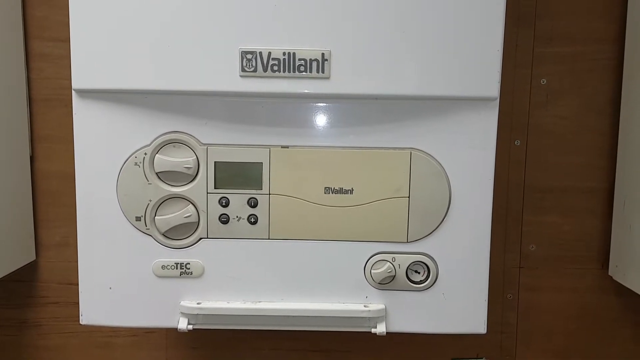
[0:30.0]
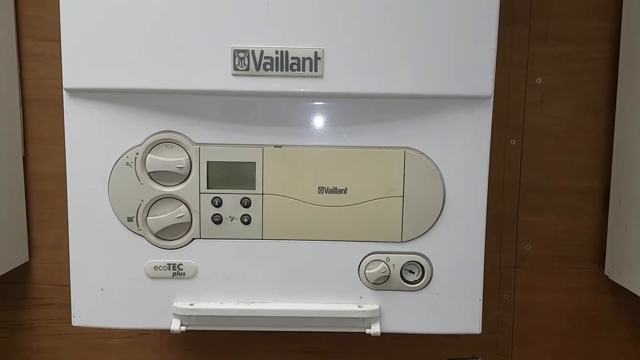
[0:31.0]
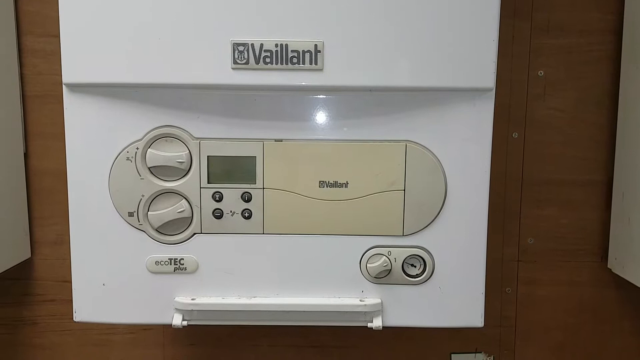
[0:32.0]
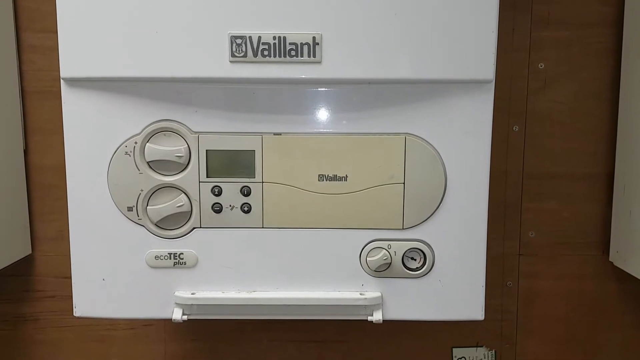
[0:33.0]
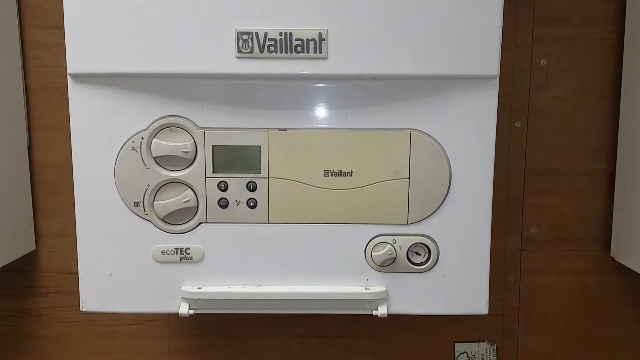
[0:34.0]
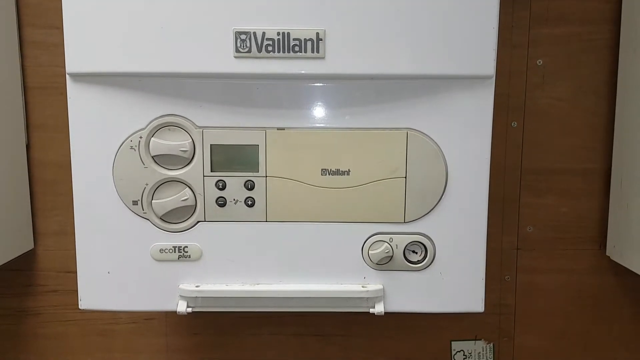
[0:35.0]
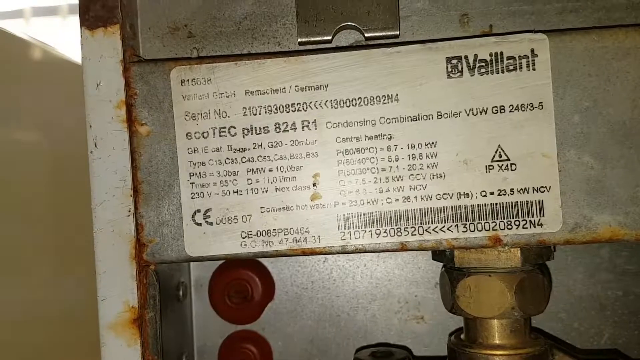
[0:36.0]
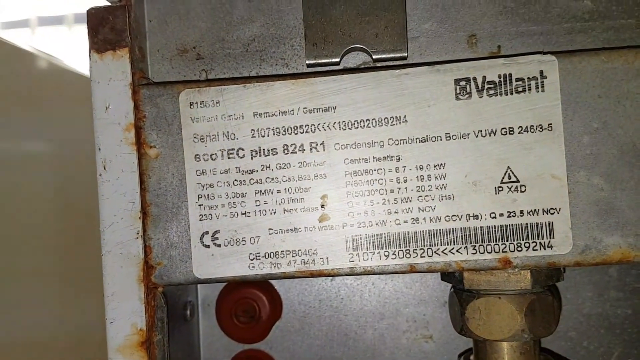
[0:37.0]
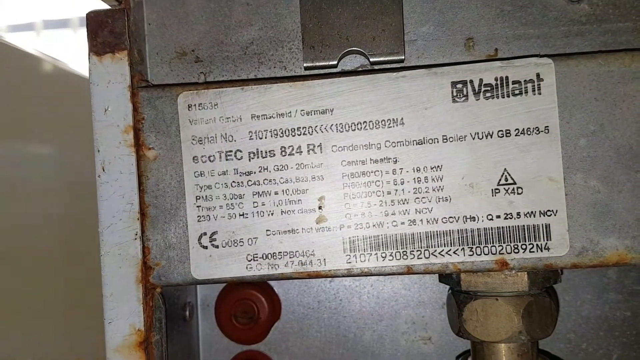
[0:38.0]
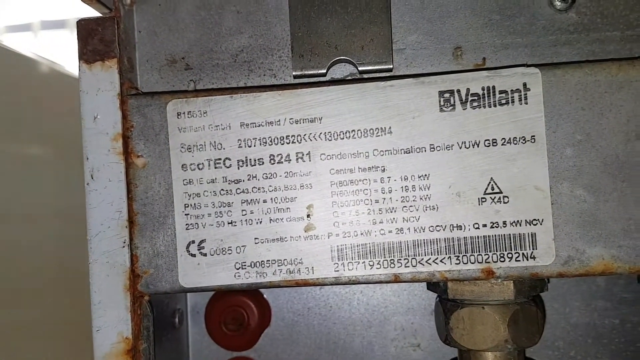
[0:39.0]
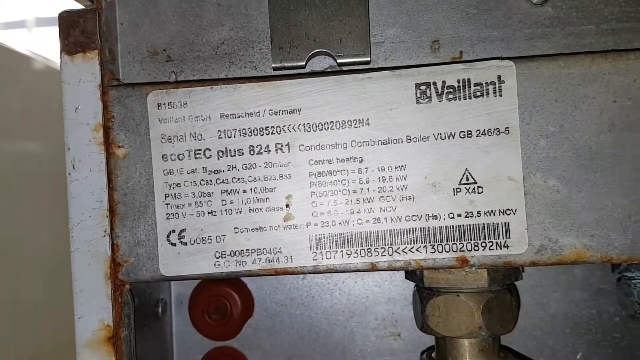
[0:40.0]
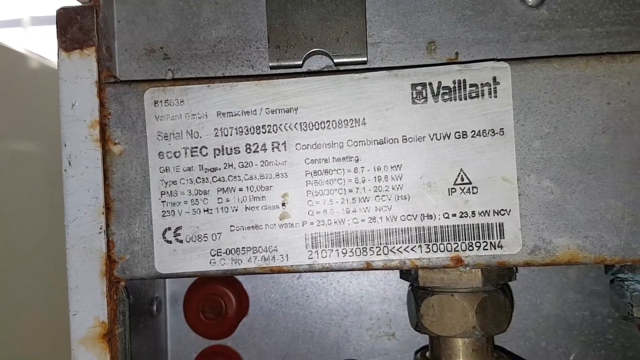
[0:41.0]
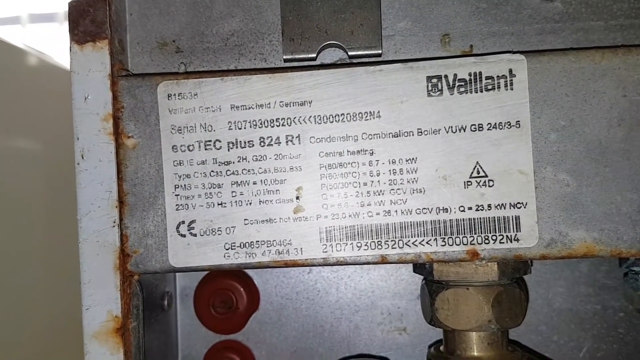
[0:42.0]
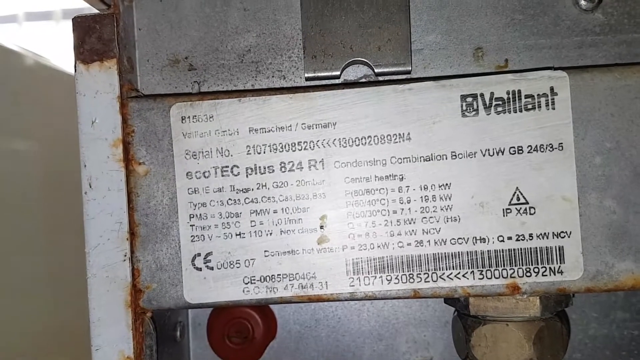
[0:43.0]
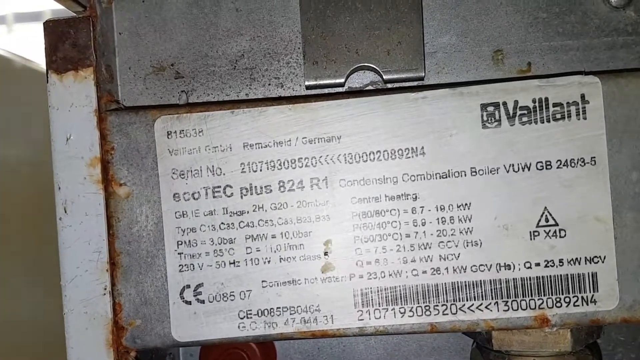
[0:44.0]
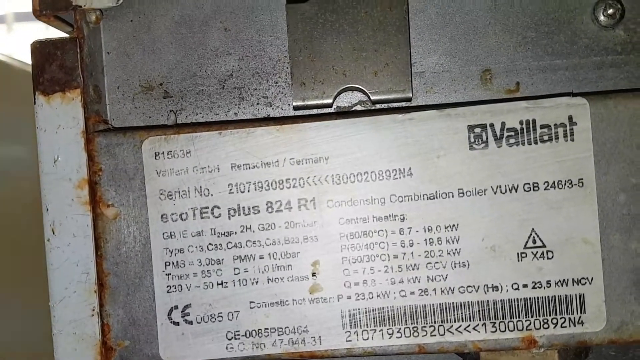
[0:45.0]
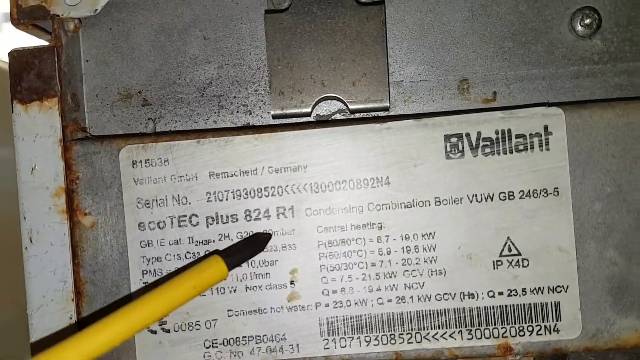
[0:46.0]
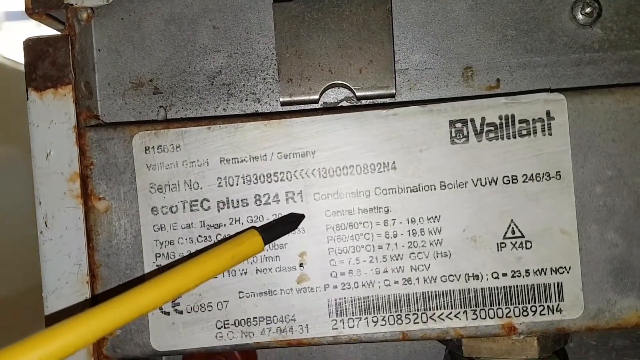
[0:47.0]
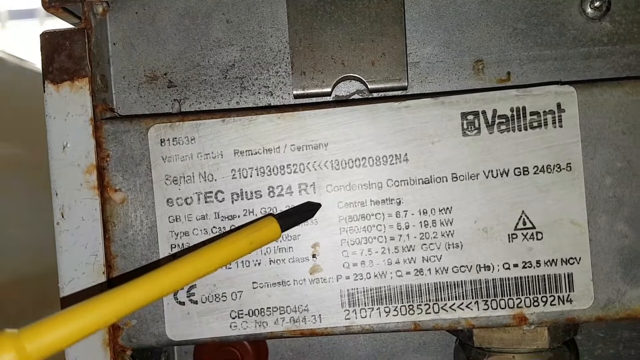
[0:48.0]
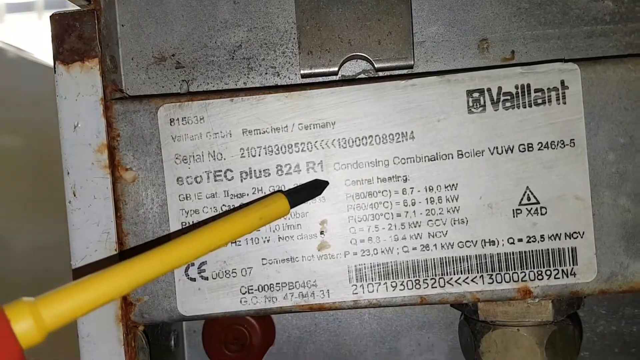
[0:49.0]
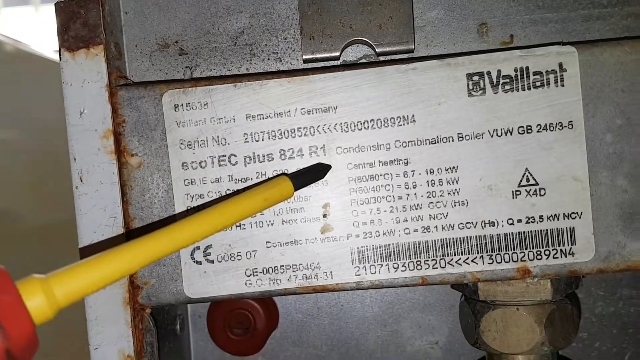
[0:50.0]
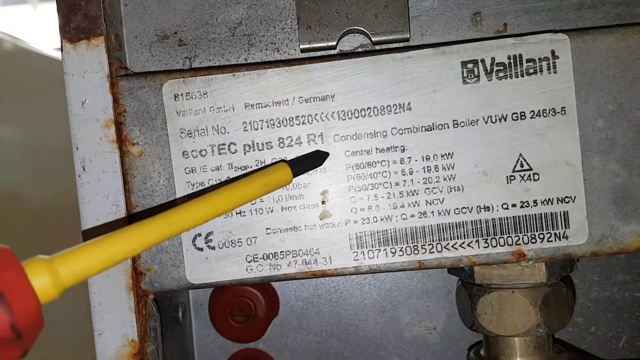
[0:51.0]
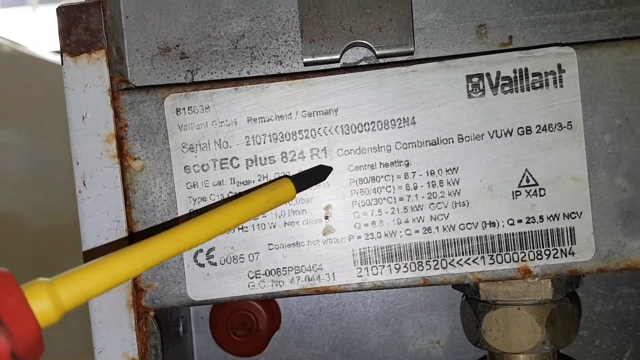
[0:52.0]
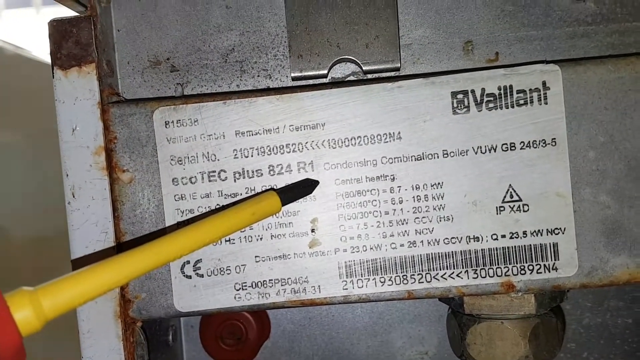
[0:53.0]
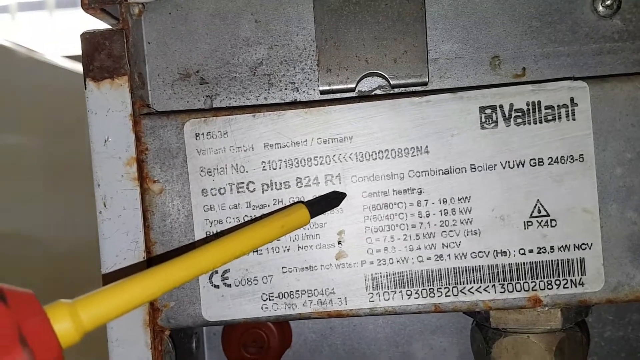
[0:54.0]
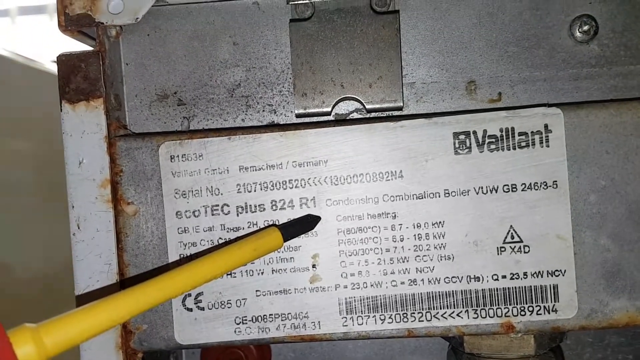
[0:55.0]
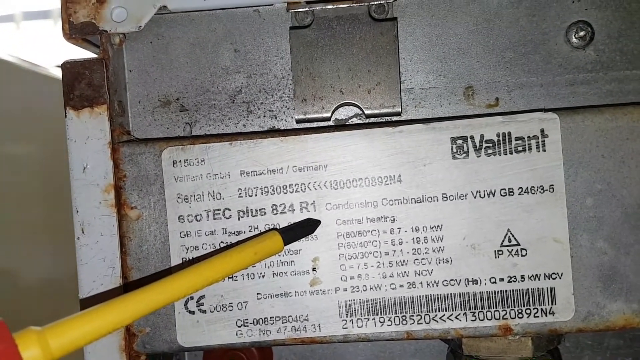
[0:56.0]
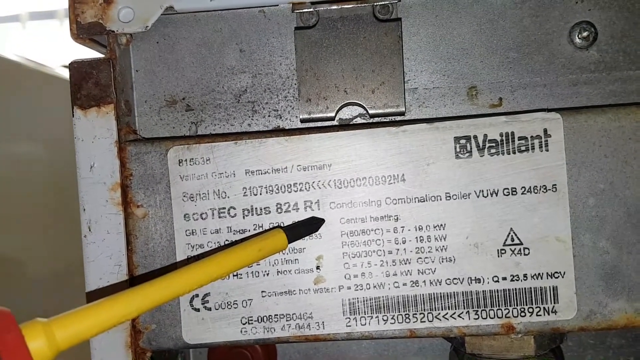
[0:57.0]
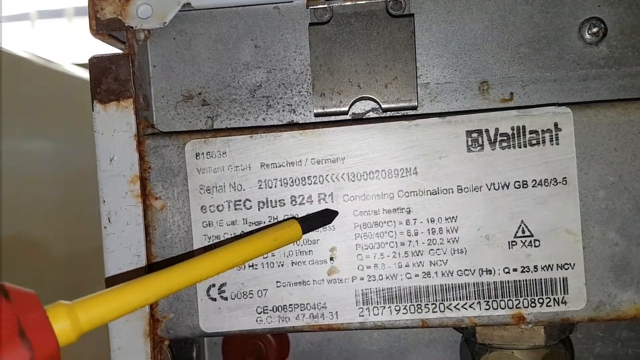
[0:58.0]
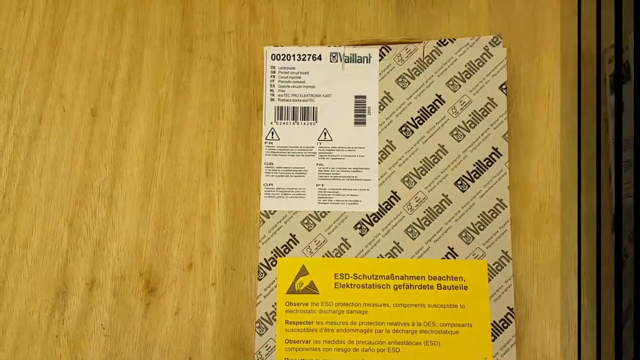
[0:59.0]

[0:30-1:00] The Vaillant device is shown, and then the back of the device appears, covered in technical details, including that it was made in Germany. A pencil or something similar points at text that says "condensing combination boiler." Next comes a brief glimpse of something in German that looks like it could be a manual for the device or possibly a box for it.